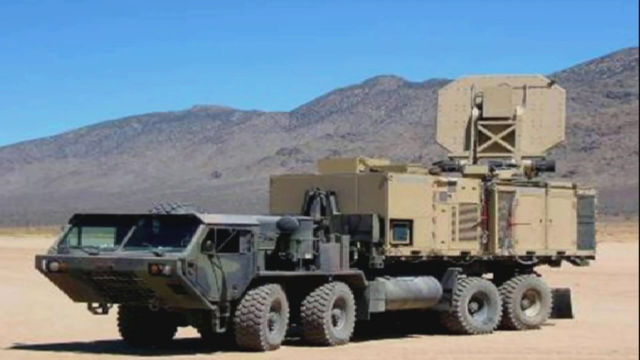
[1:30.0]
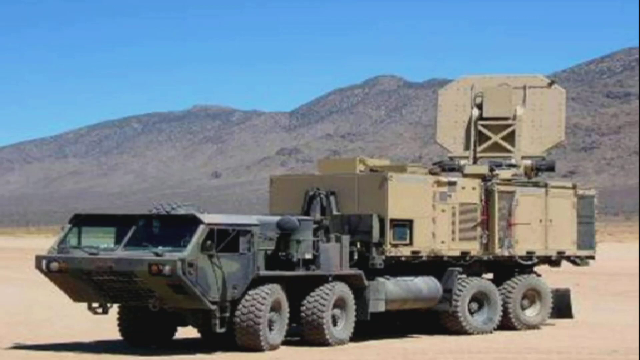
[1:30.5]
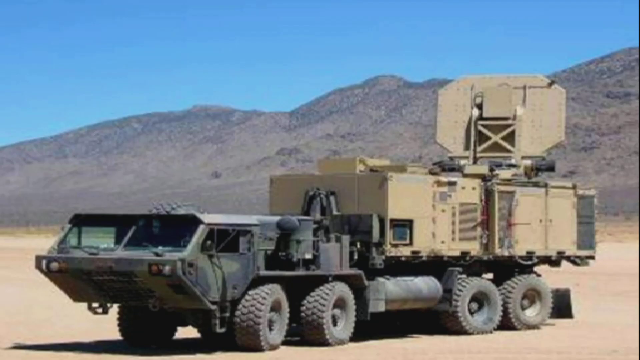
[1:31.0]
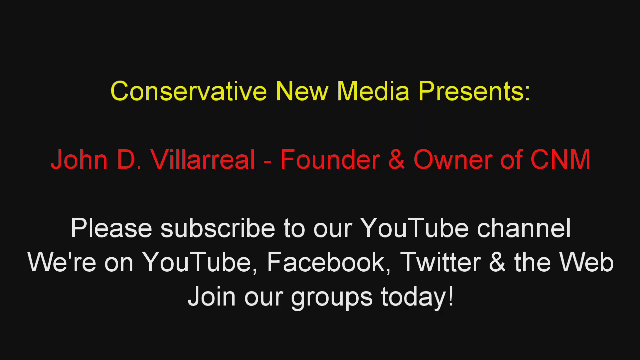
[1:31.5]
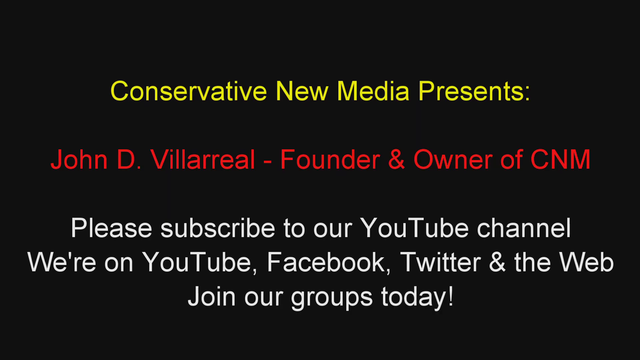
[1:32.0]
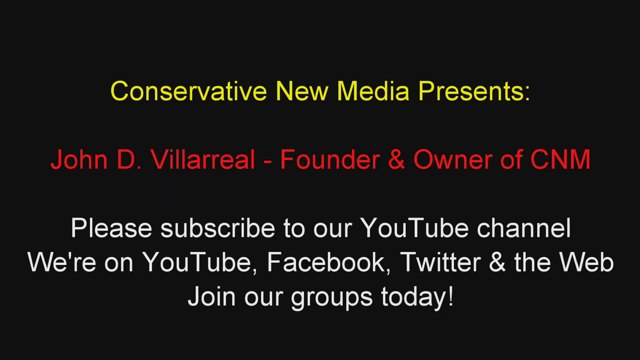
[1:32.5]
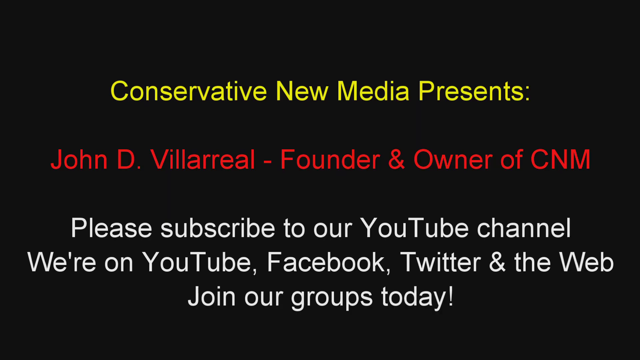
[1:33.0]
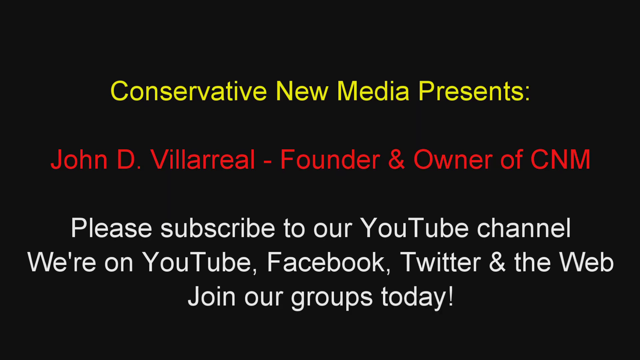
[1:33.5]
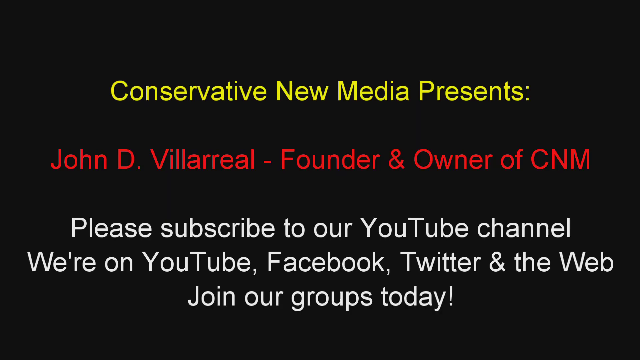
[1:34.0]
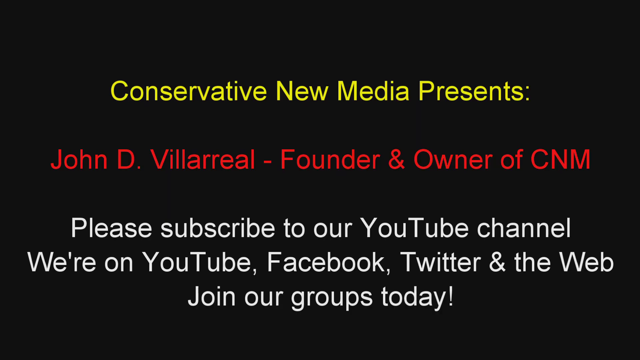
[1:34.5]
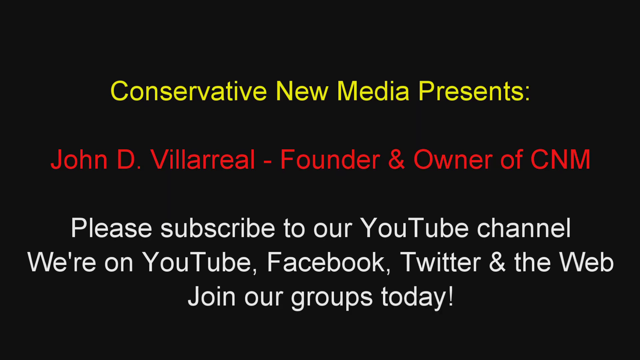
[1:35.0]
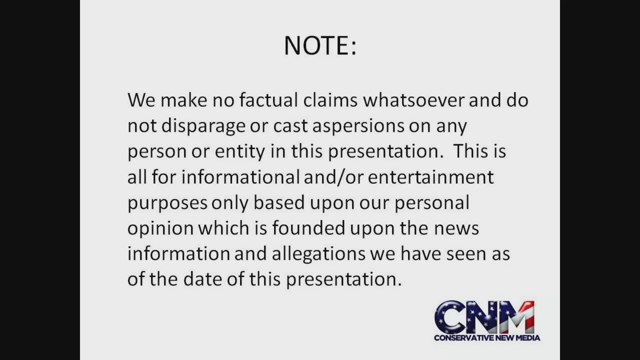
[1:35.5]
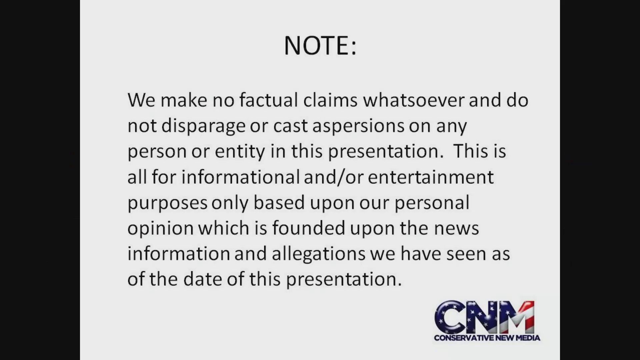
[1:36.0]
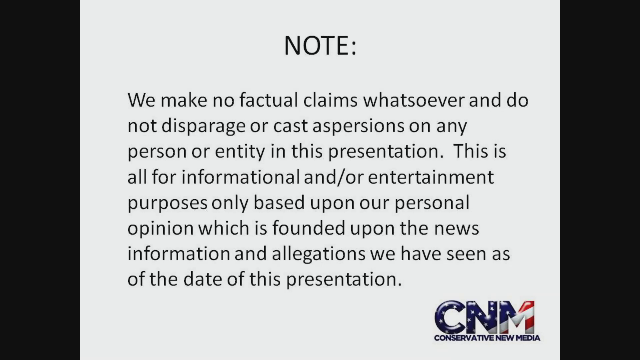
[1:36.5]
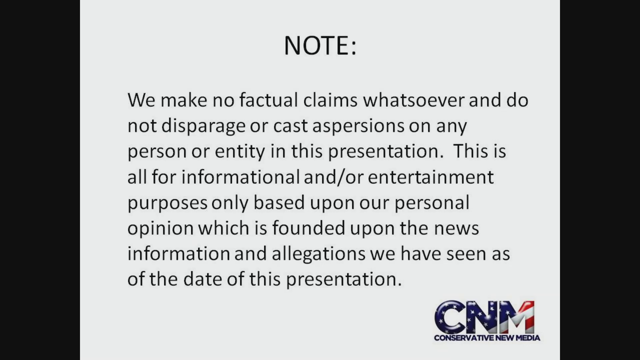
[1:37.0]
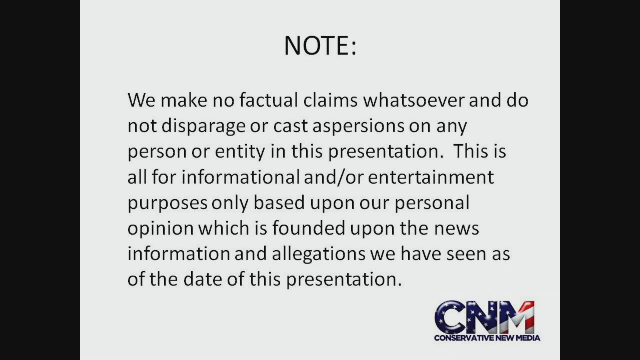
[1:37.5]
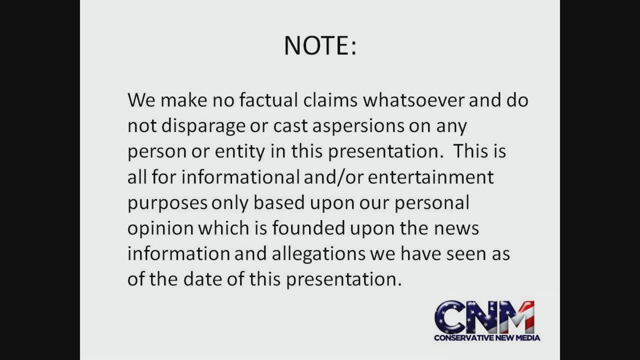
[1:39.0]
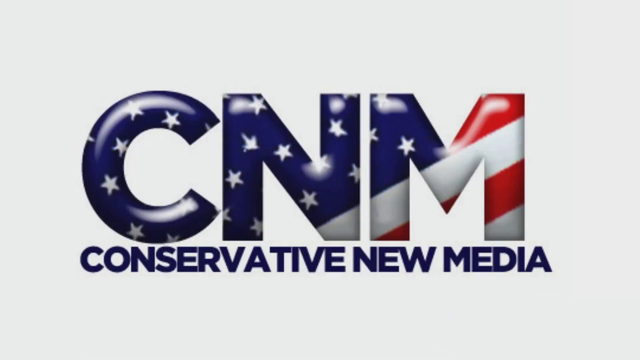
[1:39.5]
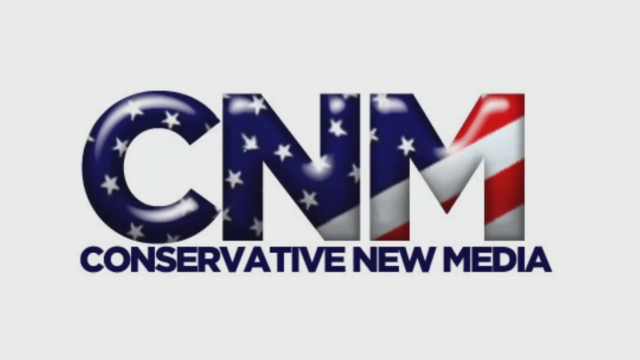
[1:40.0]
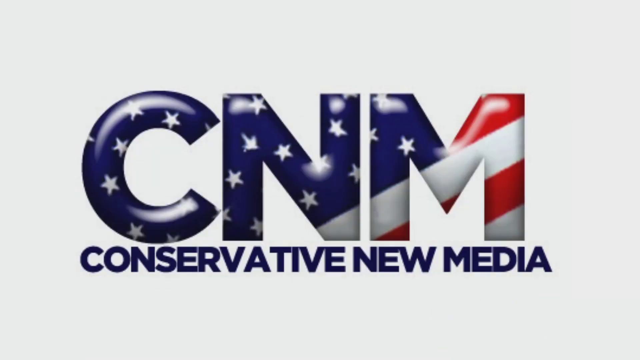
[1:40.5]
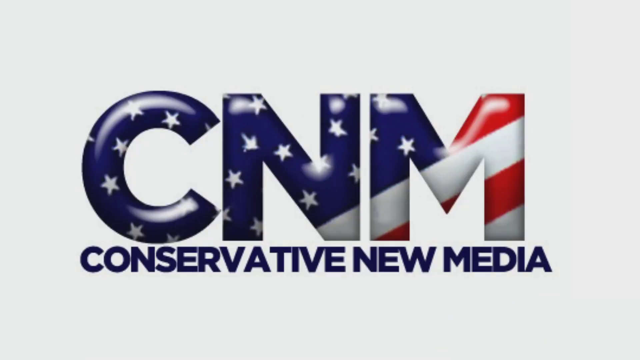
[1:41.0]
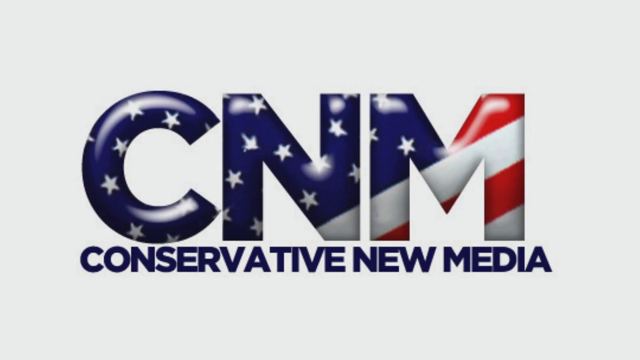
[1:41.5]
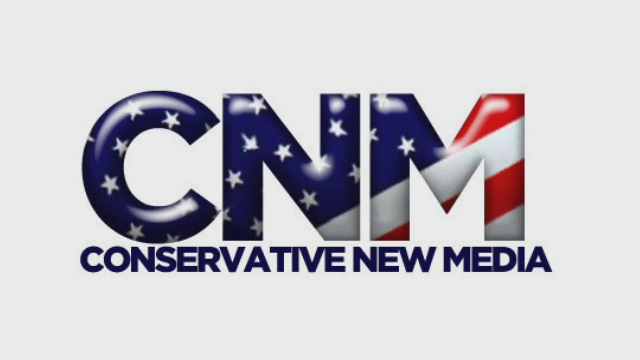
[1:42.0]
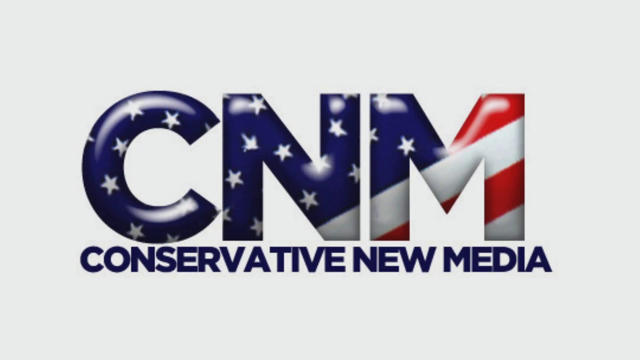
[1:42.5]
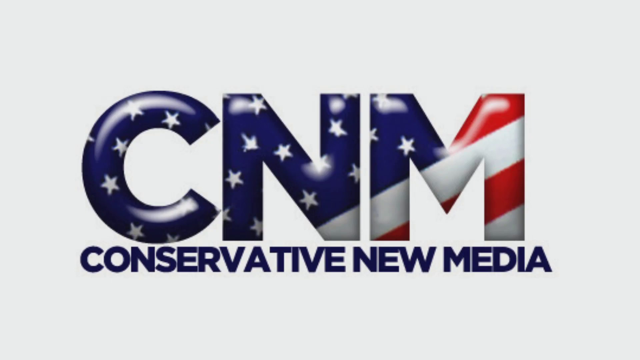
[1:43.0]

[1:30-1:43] The soldiers' truck is displayed parked on desert land with mountains behind it, its very strong wheels visible. A United States flag then appears with the same name written on it, followed by a note reading "we make no factual claims whatsoever" and "This is for the information and or entertainment purposes only based upon our personal opinion which is founded upon the news information and allegations we have seen as of the date of this presentation."